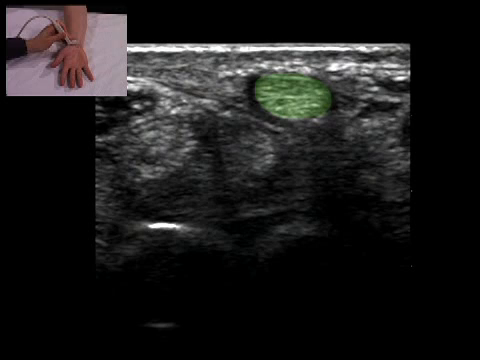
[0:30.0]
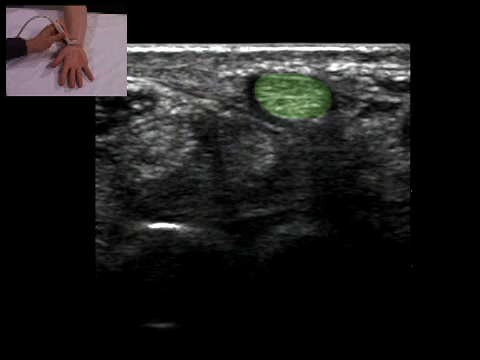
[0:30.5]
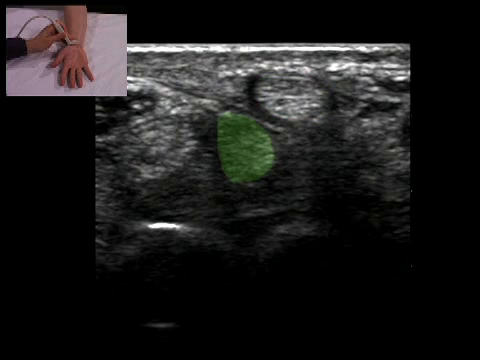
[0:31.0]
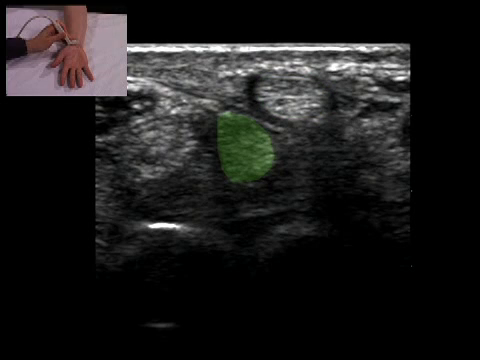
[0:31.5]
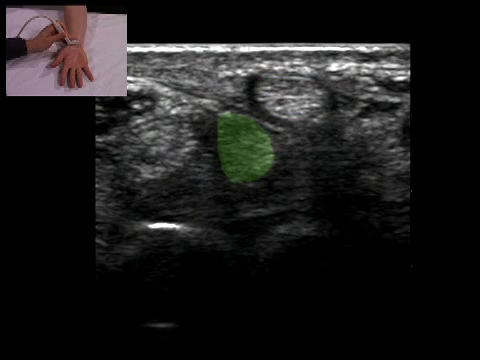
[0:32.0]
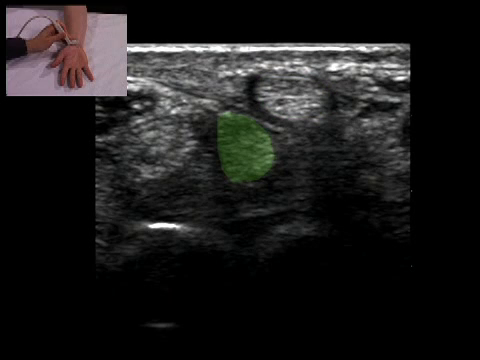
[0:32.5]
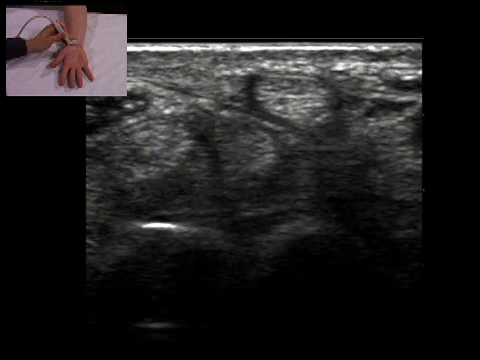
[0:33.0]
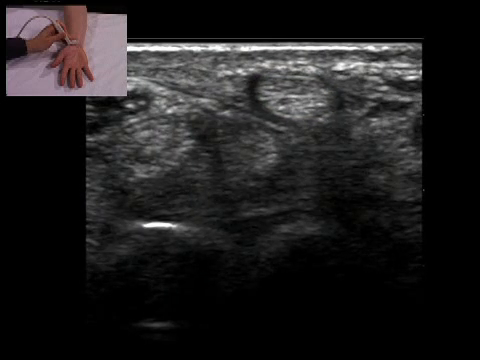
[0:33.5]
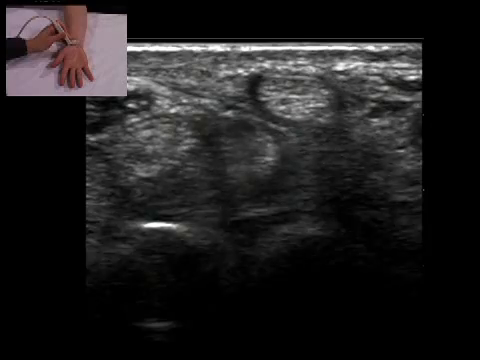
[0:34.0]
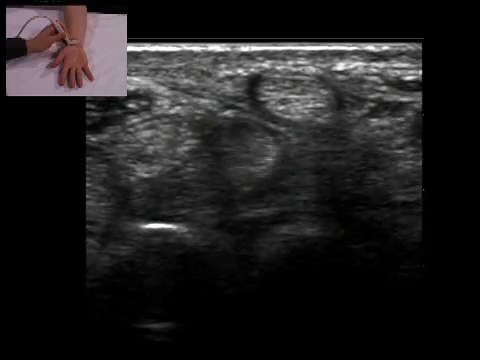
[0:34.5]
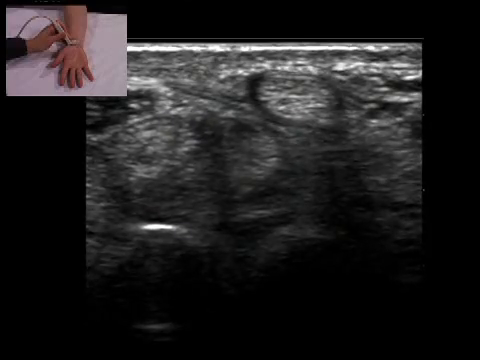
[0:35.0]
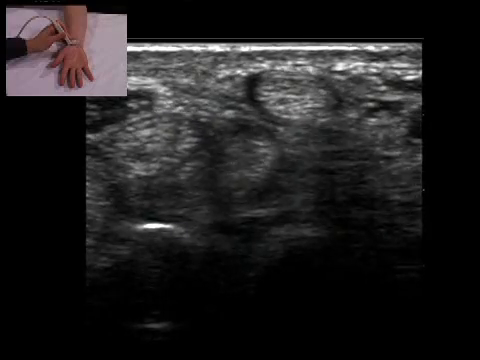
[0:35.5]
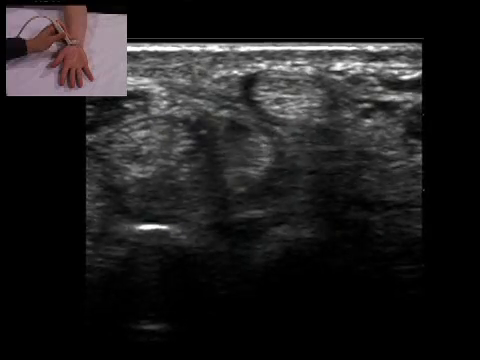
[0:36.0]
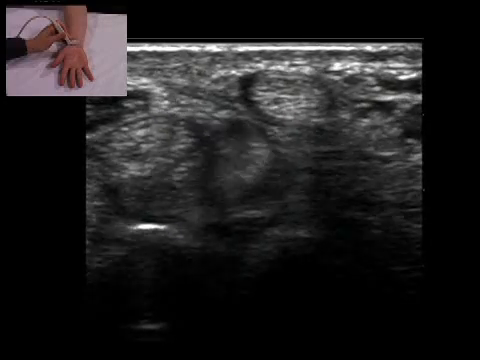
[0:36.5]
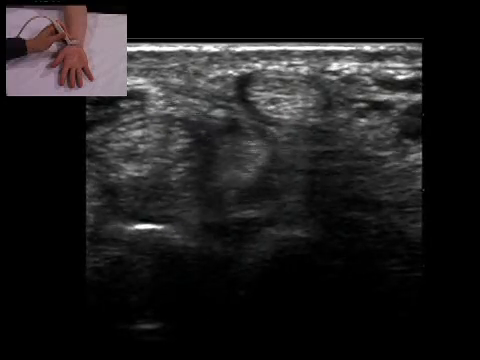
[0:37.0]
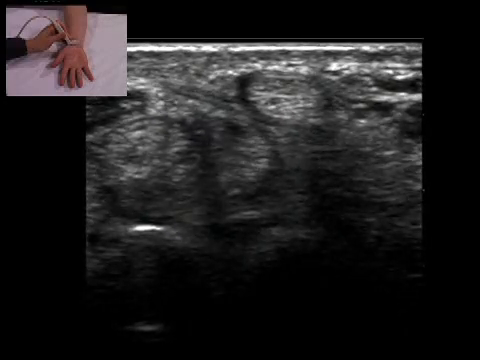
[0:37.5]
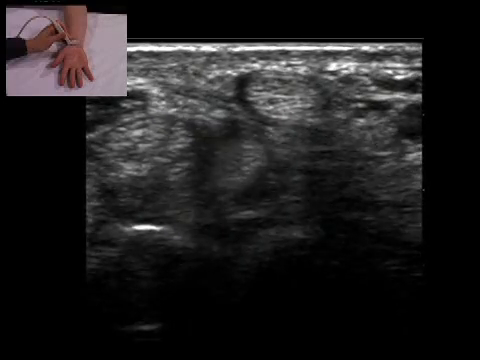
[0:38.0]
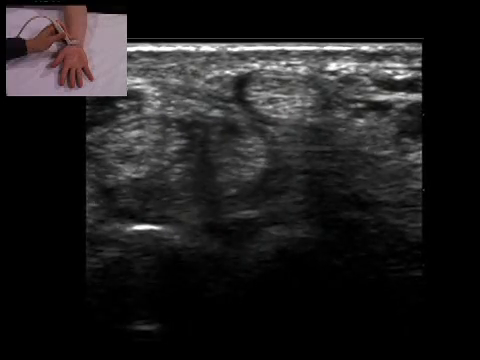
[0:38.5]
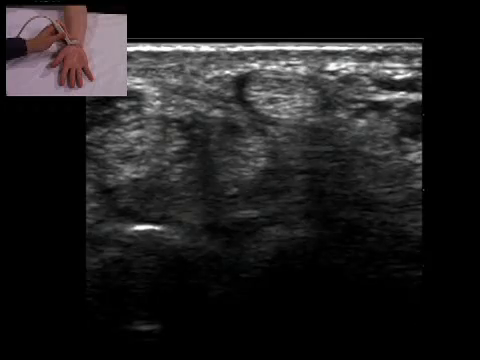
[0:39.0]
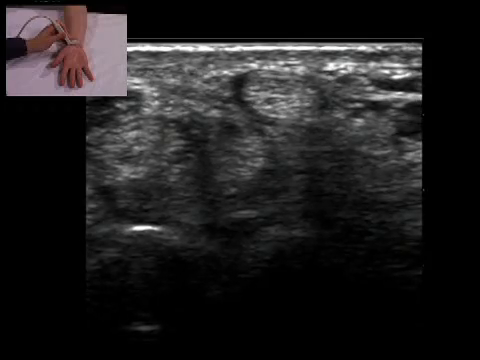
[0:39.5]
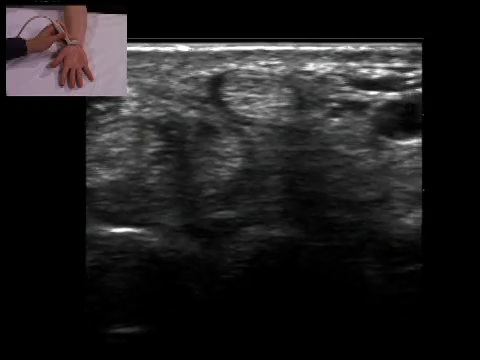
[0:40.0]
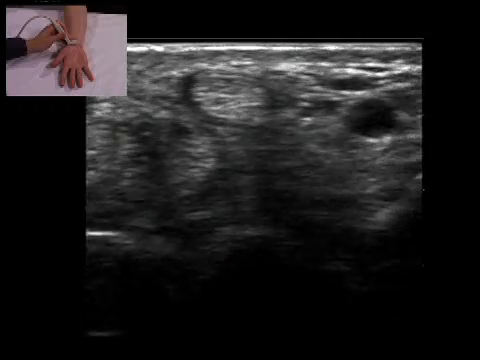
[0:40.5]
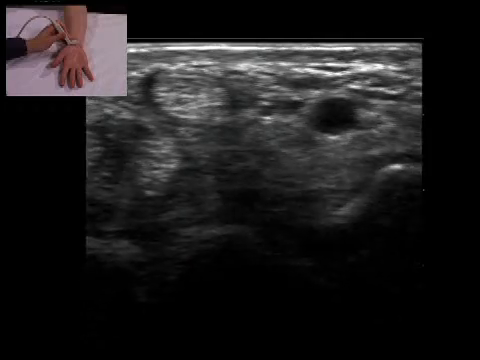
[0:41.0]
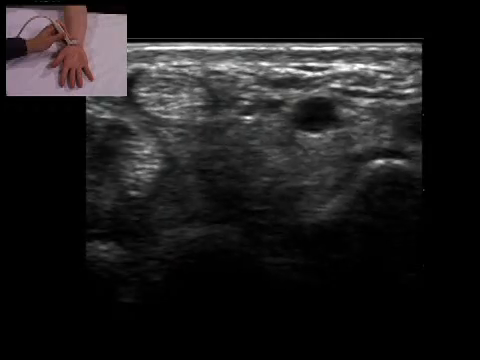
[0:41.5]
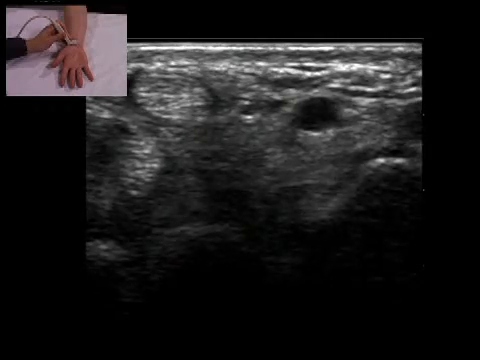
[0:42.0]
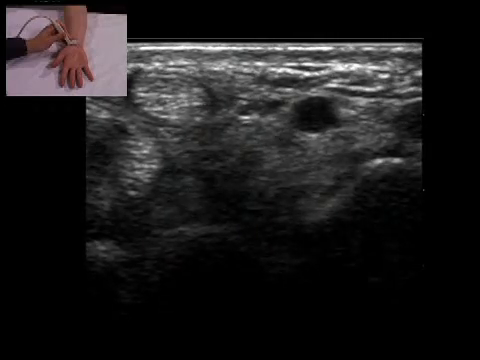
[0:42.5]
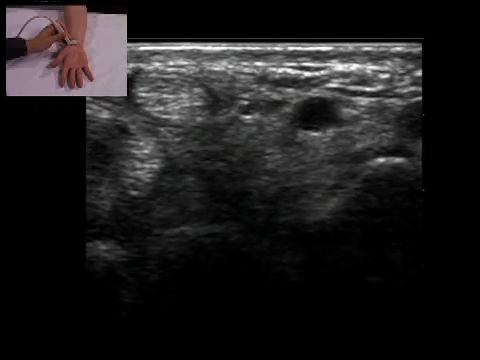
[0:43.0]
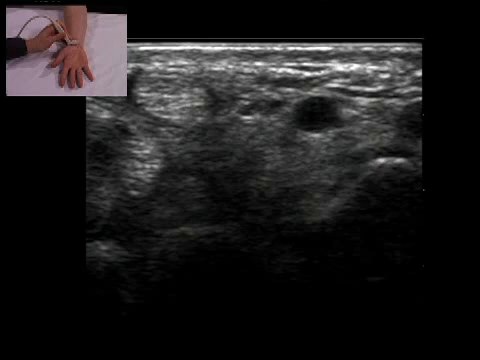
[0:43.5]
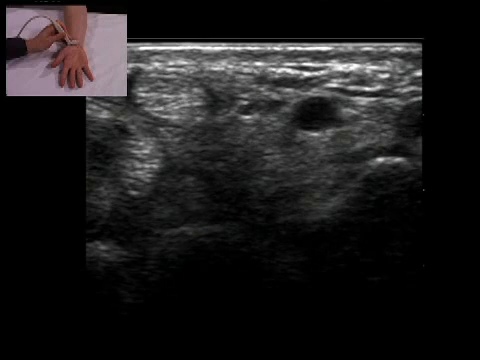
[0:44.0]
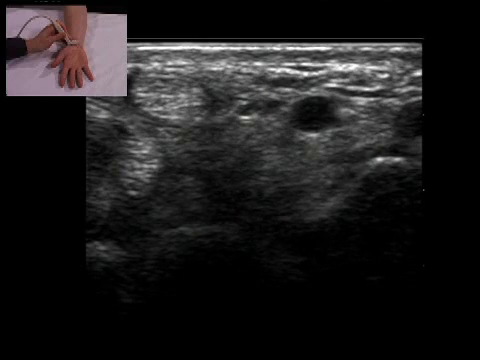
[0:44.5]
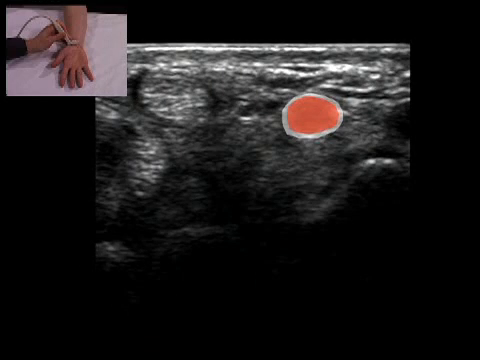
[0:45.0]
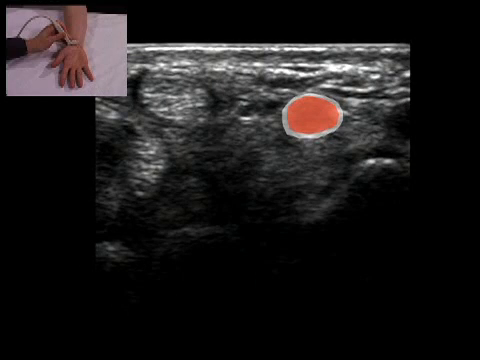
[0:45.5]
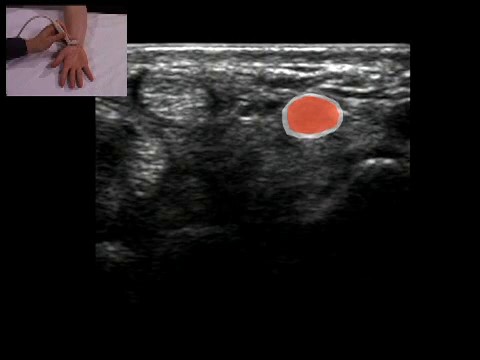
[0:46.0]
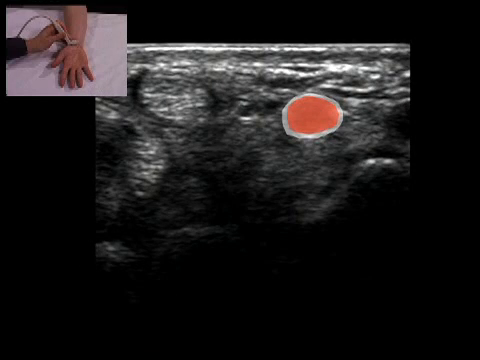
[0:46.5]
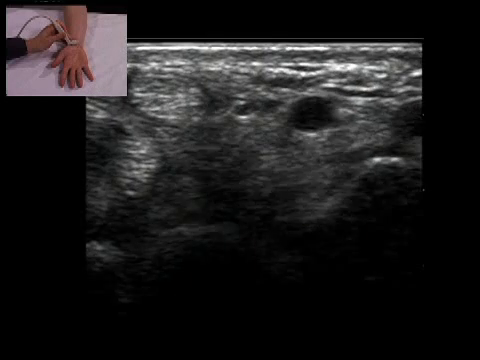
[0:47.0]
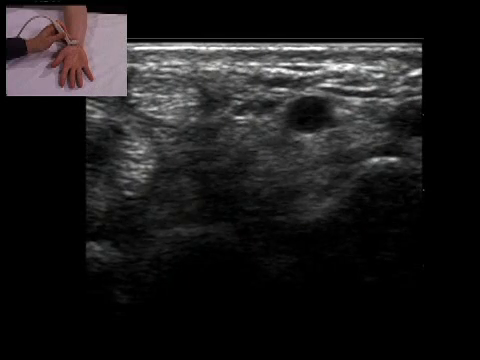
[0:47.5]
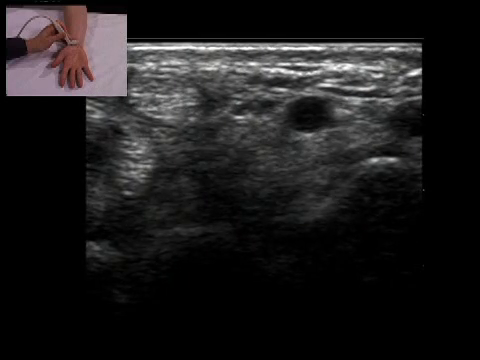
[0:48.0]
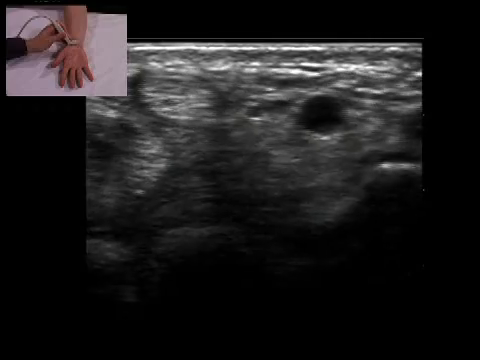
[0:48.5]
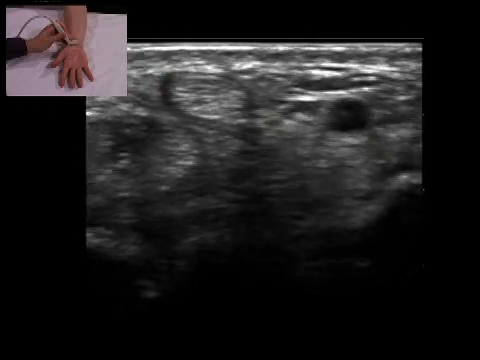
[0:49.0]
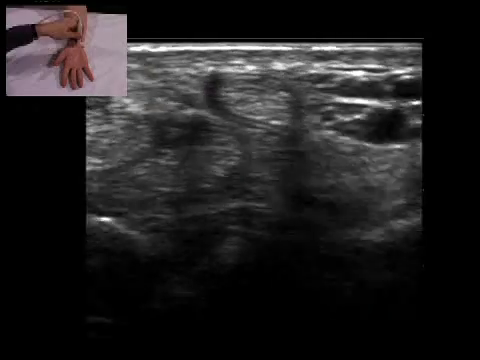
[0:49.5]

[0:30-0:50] Another circular area is highlighted in green to the left of this area. Some sort of contractions occur as the left green spot squeezes itself and pushes down a bit while the muscles to its left move it to the right. The first top ball does not really seem to move at all and stays mostly stagnant. The camera pans right again, revealing a black opening to the right of the top ball shape that sort of gapes while the muscles are not moving; it is highlighted in red for a bit. Another one appears to the right, but the camera moves over to the left, and the muscles move along with the camera movement. The red ball's gaping movement is mostly in the top and bottom parts of its circle.